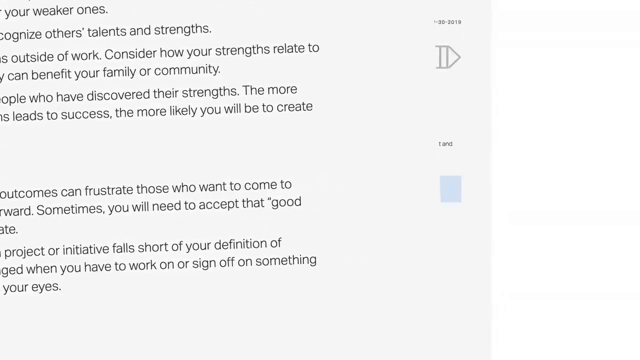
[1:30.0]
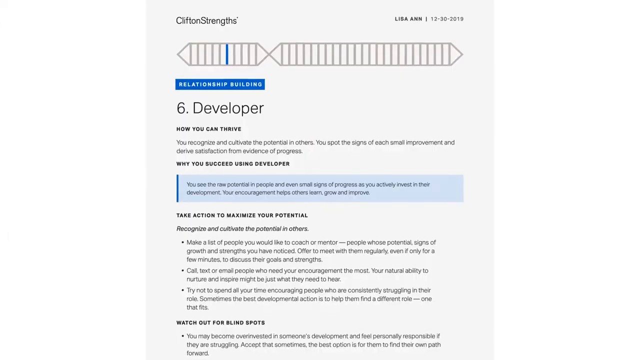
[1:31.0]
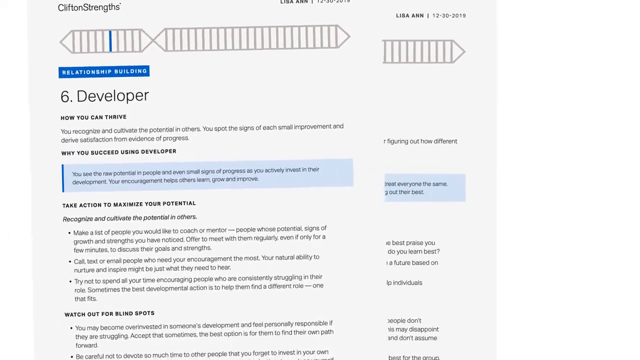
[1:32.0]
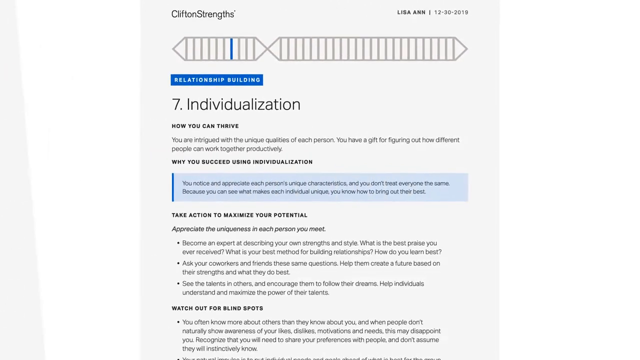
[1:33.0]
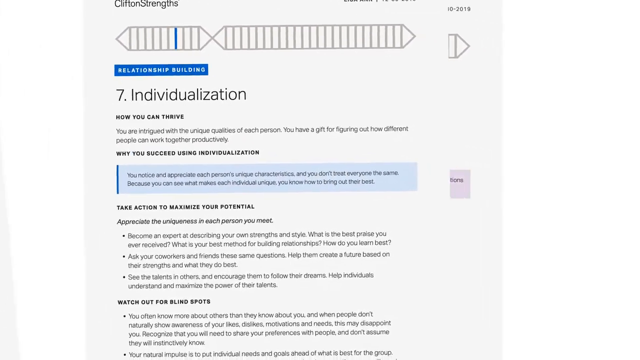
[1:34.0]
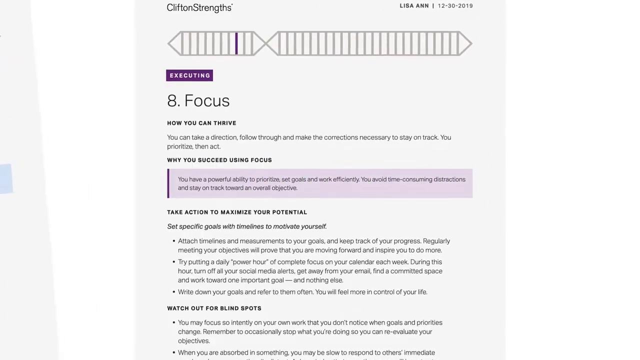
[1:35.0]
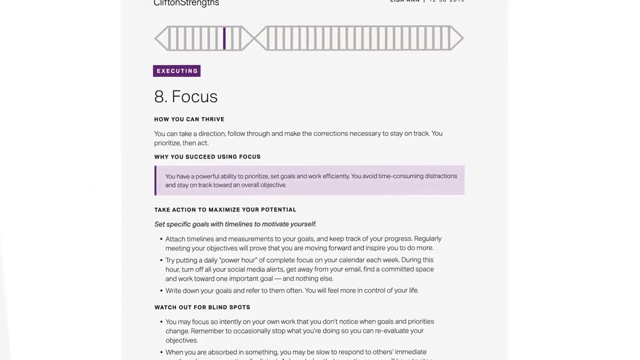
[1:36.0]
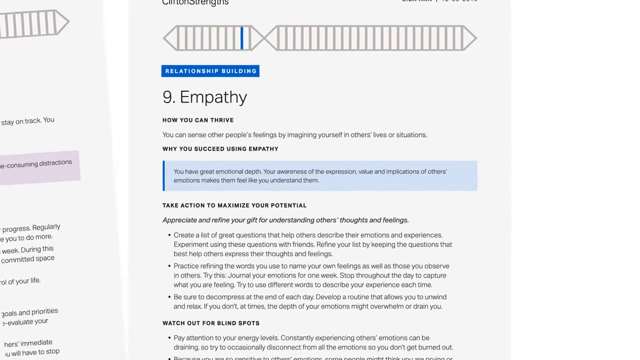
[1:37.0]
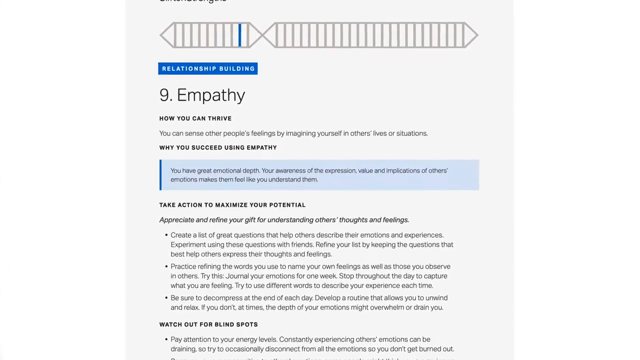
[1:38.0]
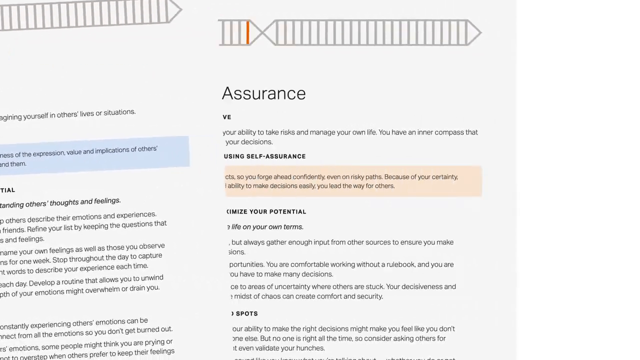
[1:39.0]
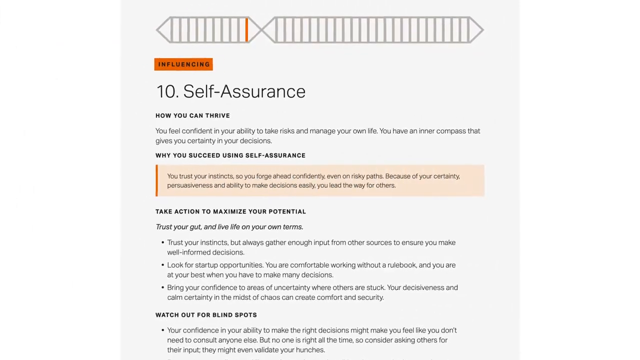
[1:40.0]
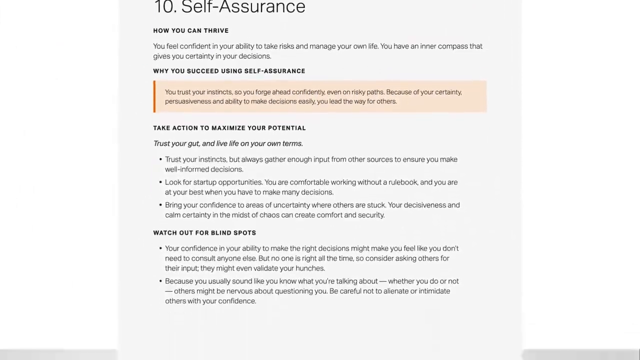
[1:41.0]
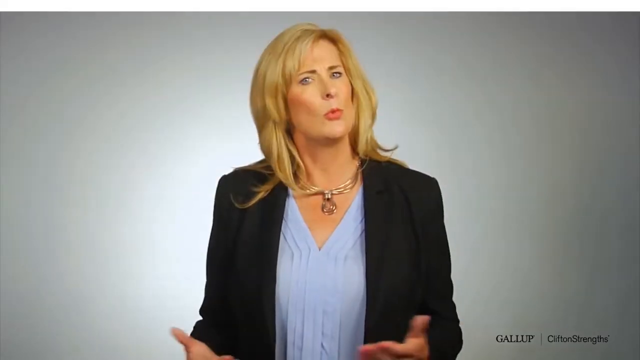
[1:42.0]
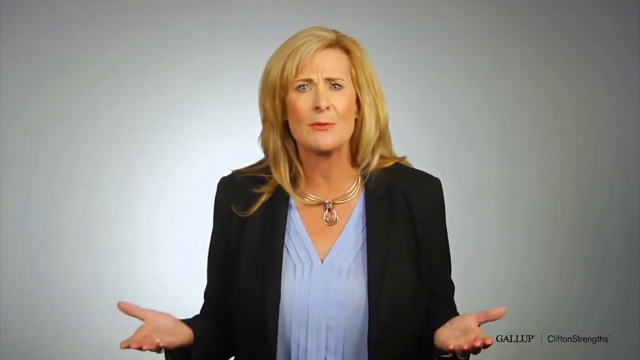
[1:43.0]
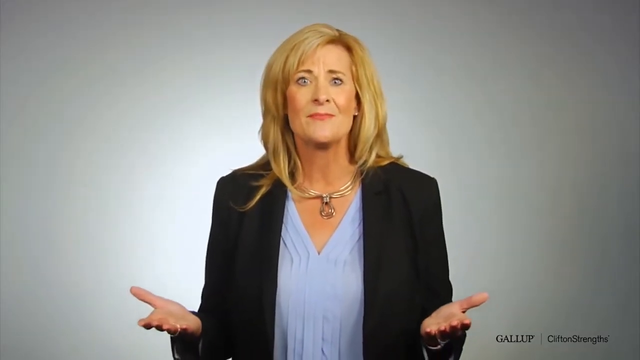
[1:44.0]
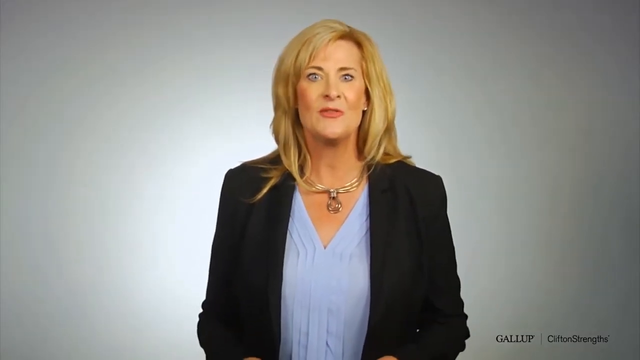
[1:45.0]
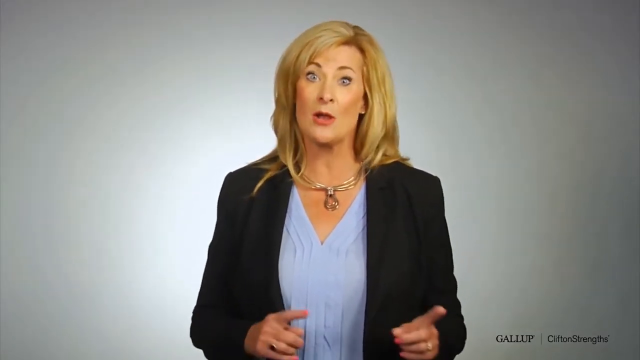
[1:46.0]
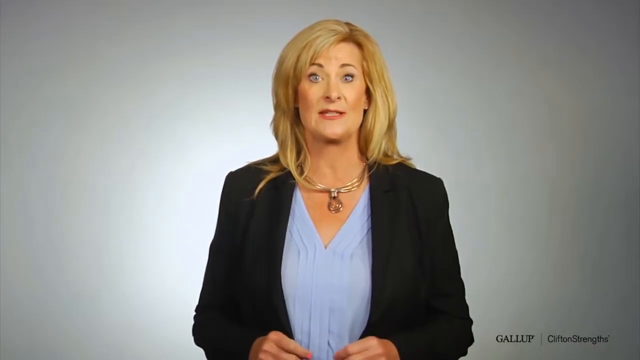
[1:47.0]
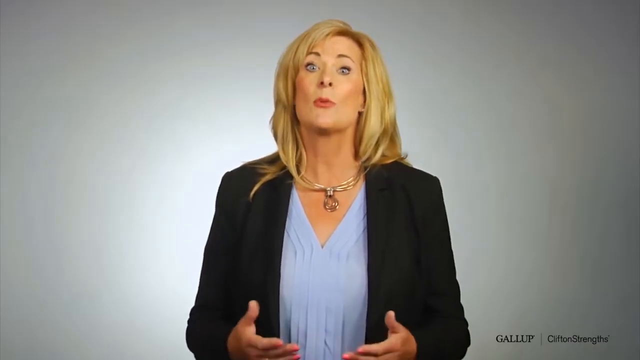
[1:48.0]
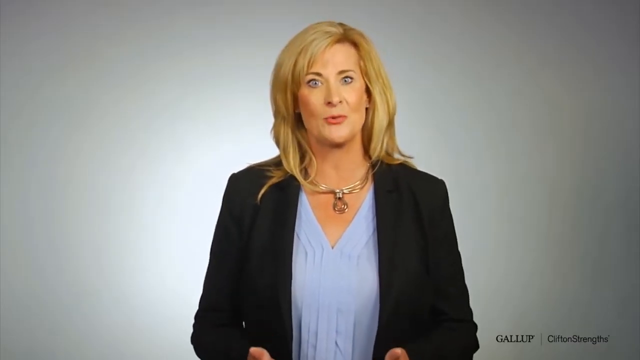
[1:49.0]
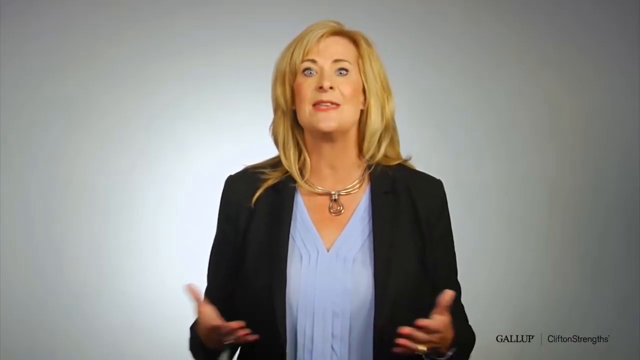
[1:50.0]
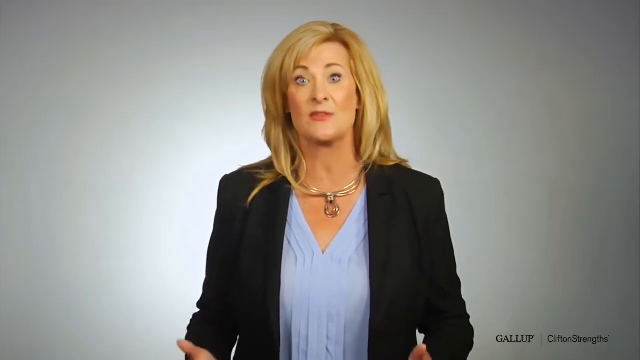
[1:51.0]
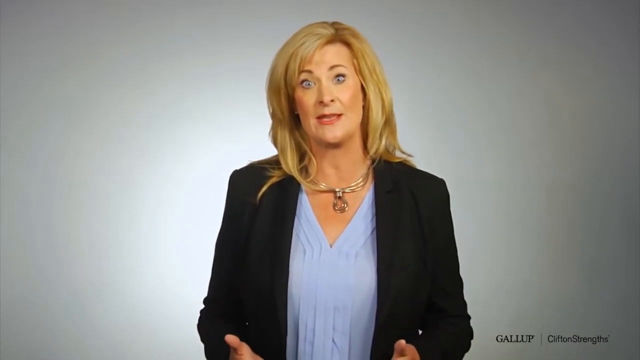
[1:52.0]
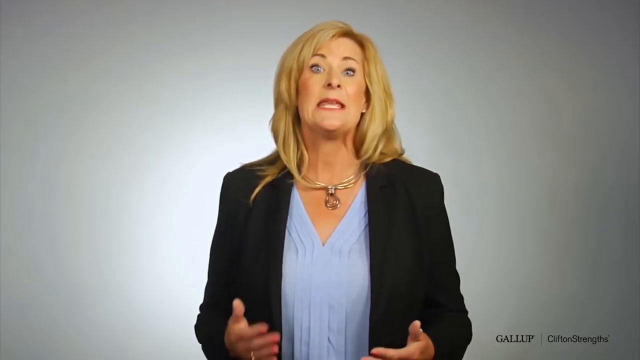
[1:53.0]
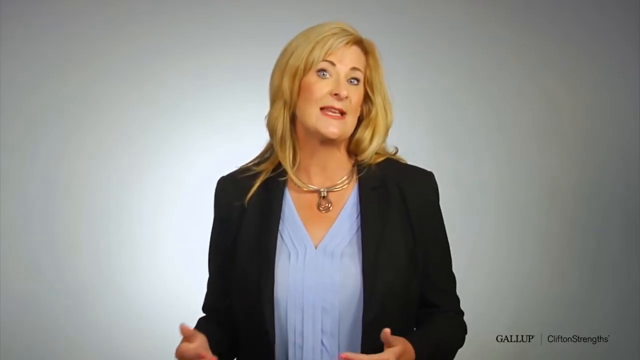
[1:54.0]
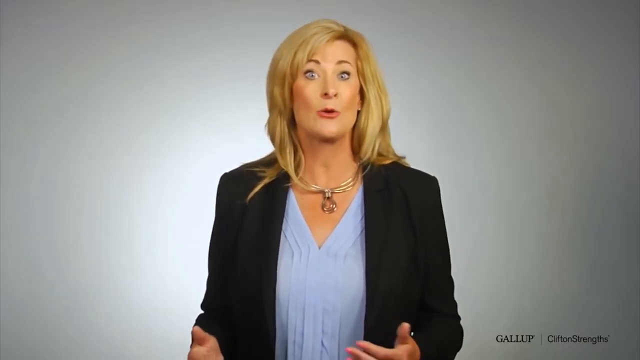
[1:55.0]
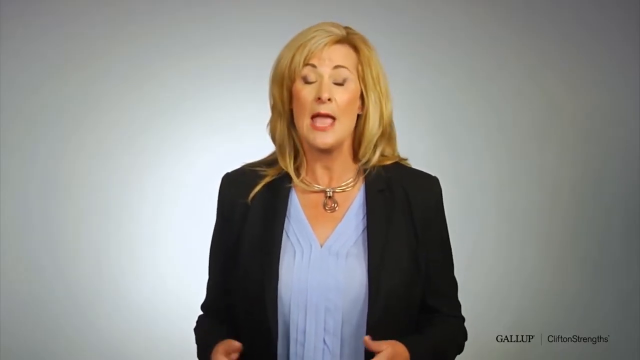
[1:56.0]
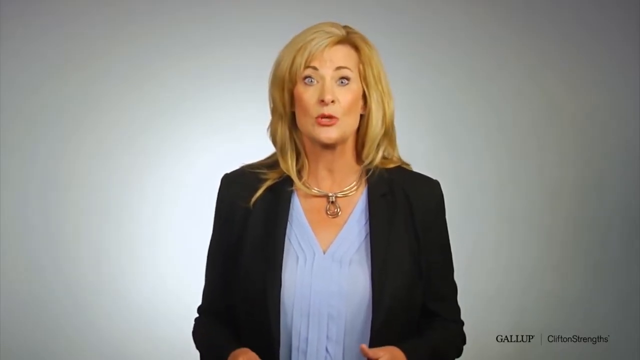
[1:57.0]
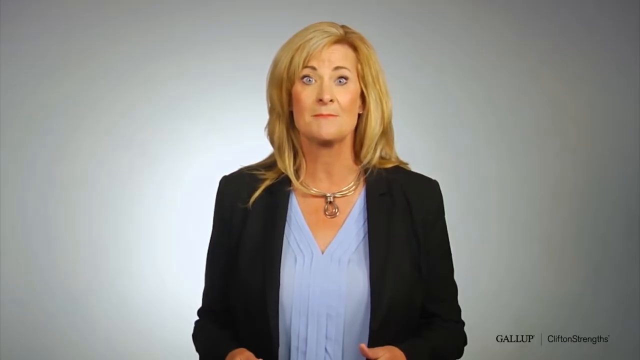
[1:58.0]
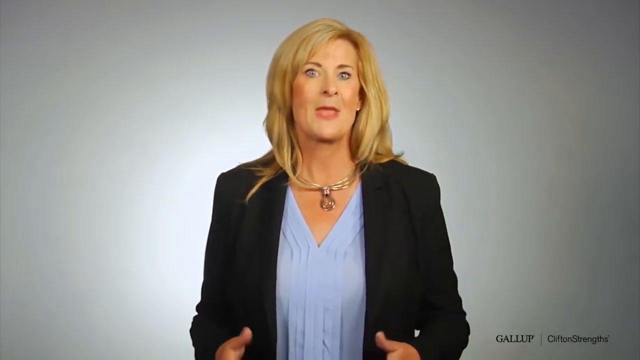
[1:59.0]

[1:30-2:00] The video moves quickly through pages of other traits, less focused than on the maximizer: developer, individualization, focus, empathy, and self-assurance, number 10. The empathy page includes text such as "you can sense other people's feelings by imagining yourself in others lives or situation", "why you succeed using empathy", "you have great emotional depth", "take action and maximize your potential" and "appreciate and refine your gift for understanding others thoughts and feelings", with more text beyond that. The pages then peel back to show the woman speaker seen at the beginning and a couple of times in the middle, who continues talking.